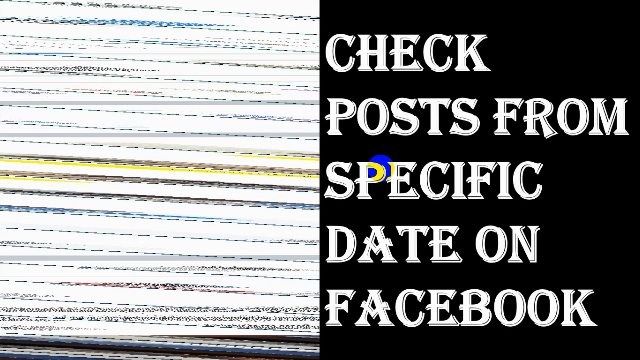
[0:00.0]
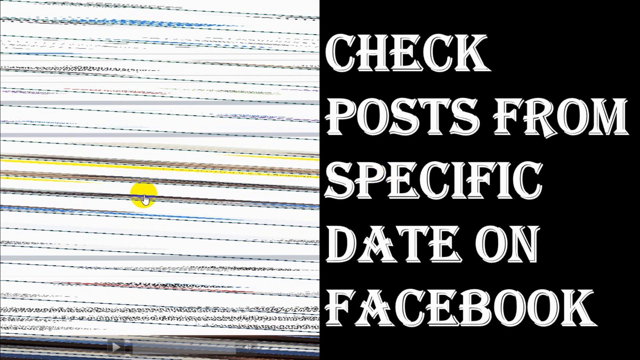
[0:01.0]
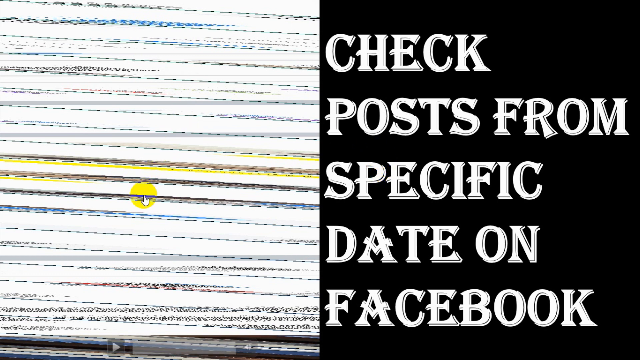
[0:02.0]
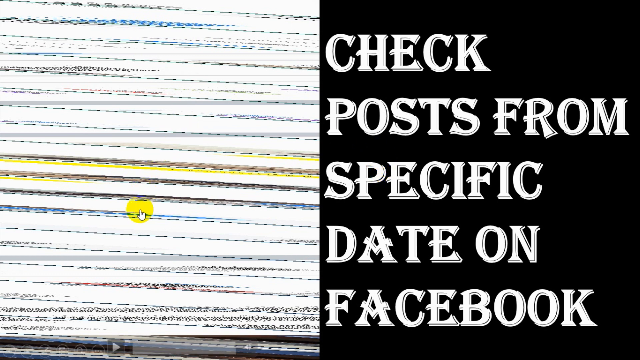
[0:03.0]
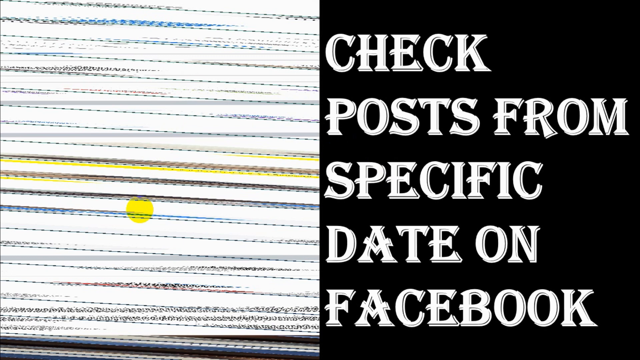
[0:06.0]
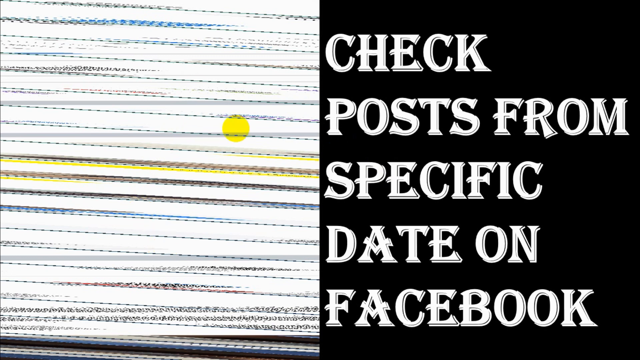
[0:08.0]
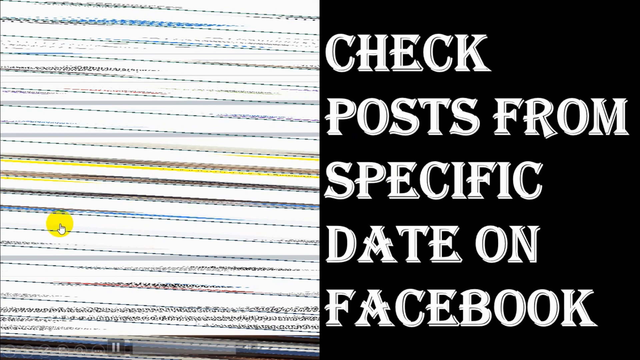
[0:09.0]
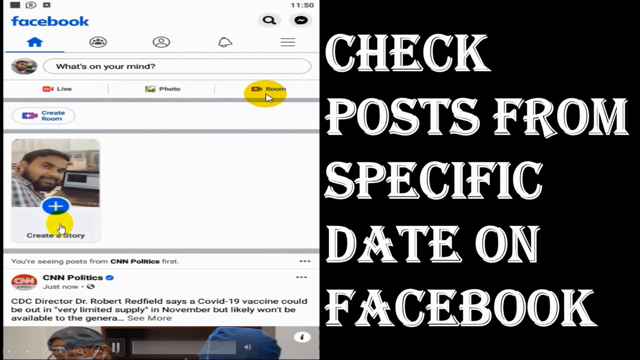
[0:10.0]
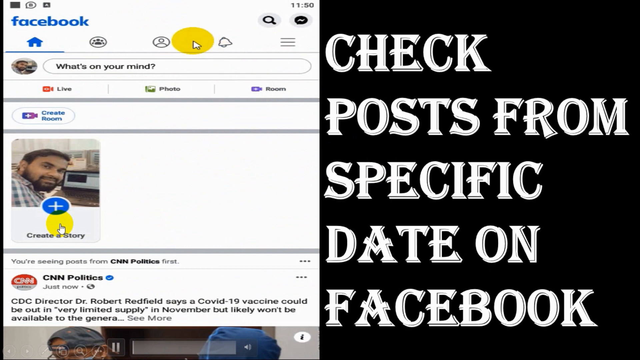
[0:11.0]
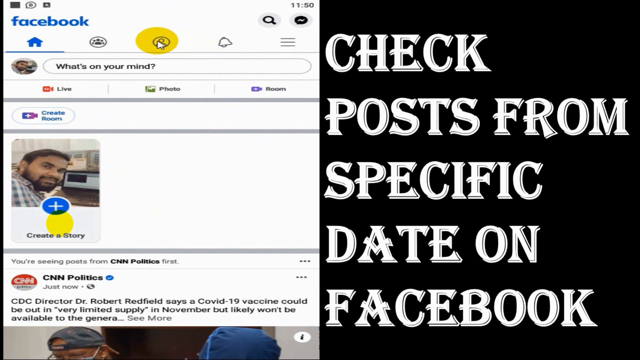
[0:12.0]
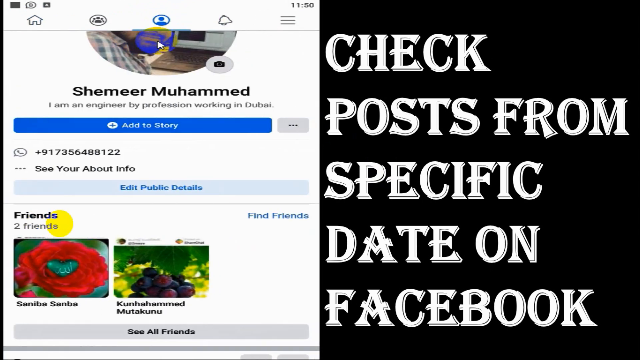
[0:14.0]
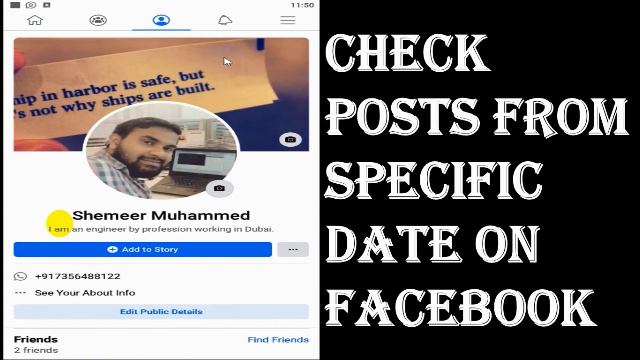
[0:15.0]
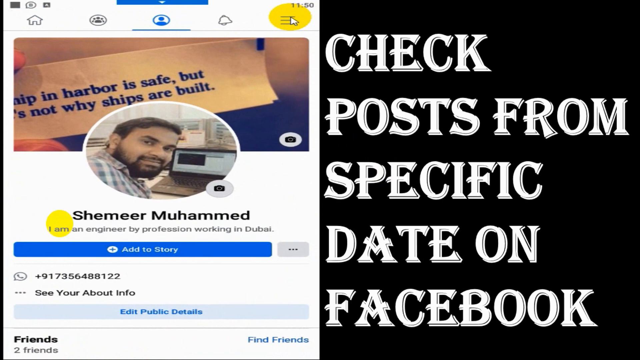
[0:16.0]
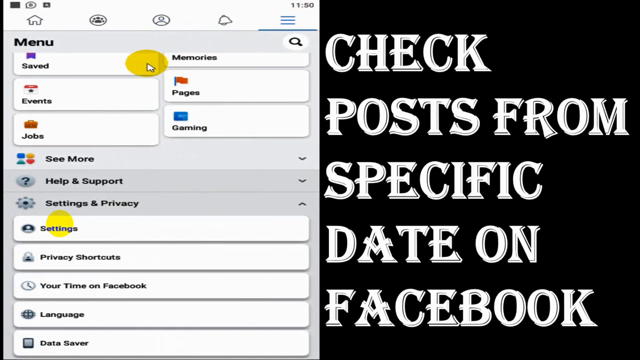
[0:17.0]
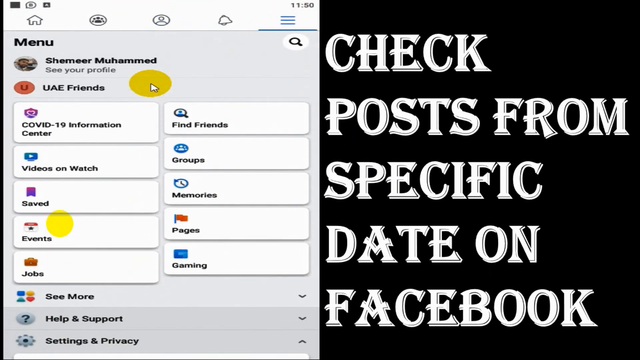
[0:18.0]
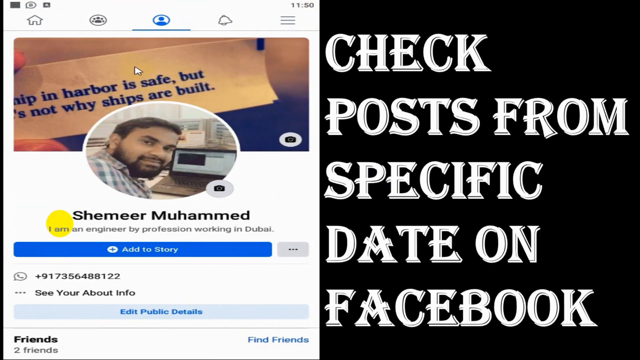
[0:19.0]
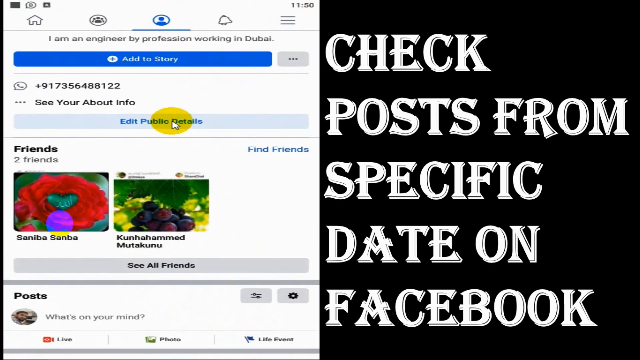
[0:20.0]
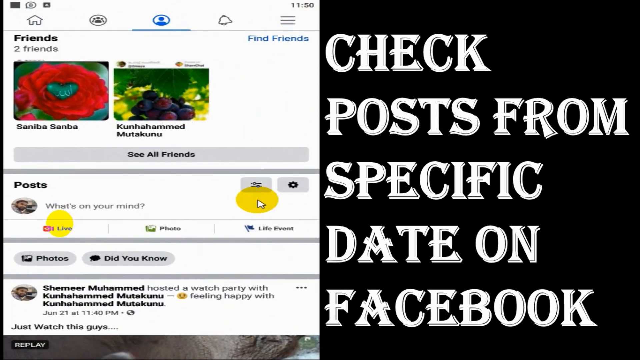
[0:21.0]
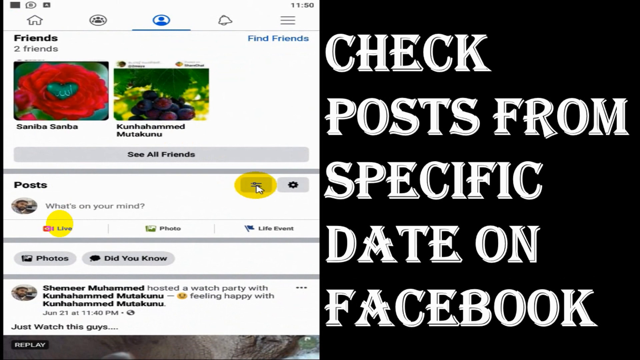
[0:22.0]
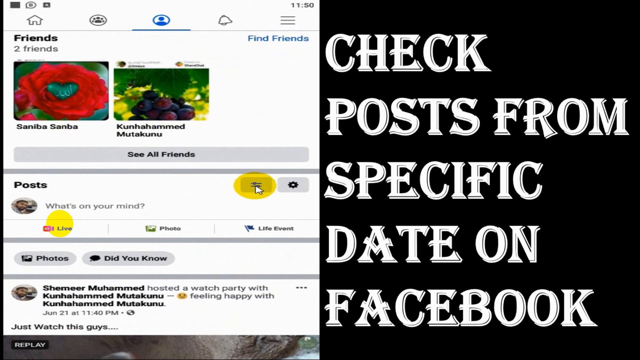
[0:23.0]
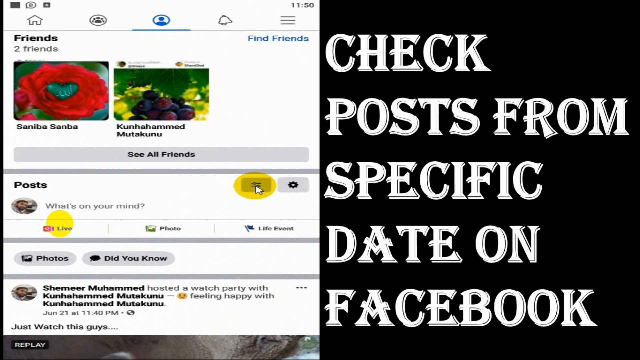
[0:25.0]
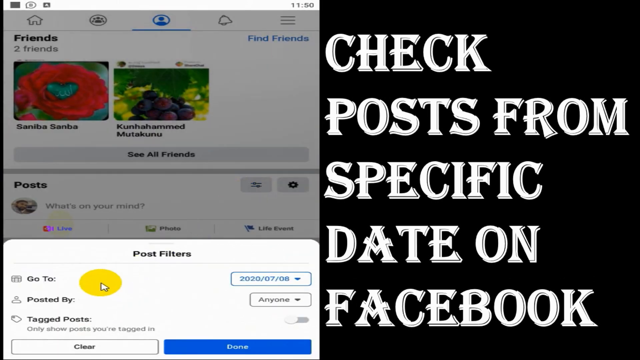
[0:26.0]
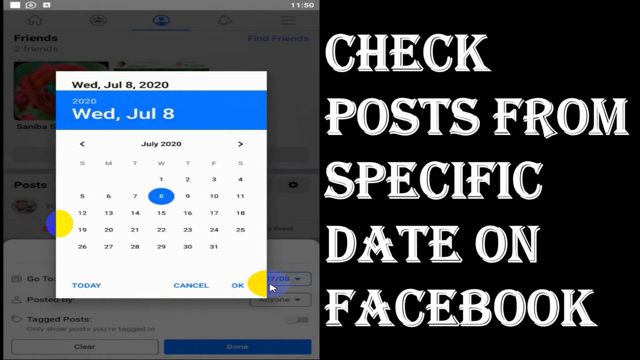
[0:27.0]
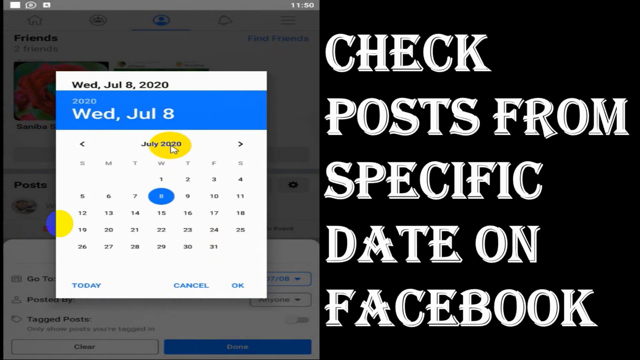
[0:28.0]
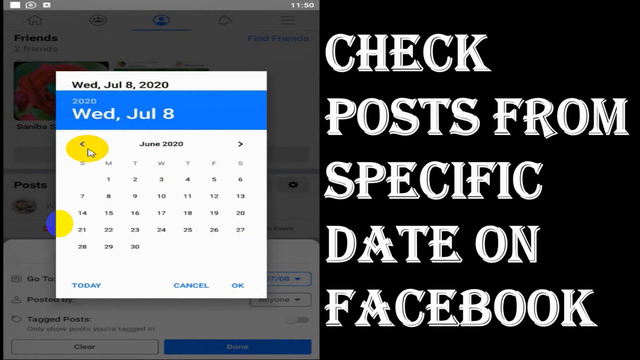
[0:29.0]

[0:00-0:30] An odd pattern fills the left side of the screen, while the right side reads "Check posts from specific date on Facebook." A cursor is highlighted by a yellow circle. The cursor moves to the left side of the screen and hovers in the middle; a click is made, but nothing happens. The cursor then disappears while the yellow circle remains. The circle is moved around a bit, another click is made, and a Facebook page appears, slightly squished top to bottom, showing a picture of a man. A post by CNN Politics is near the bottom of the screen. The cursor moves to the top middle of the screen and hovers over the Facebook profile icon. Clicking it opens the profile page of someone named Shemeer Muhammed, which says "I am an engineer by profession working in Dubai" and shows the usual Facebook elements, including that he has two friends. The page is scrolled up, showing the image of the man with a fortune cookie-type message in the background. The cursor moves to the hamburger menu at the top right, and a click opens the Facebook menu with many options. The menu is scrolled to the top, the man's name at the top is clicked, and his profile page returns. The page is scrolled down to show posts. The hamburger menu next to the posts is clicked, revealing the post filters menu. A calendar is brought up that says Wednesday, July the 8th, 2020. The cursor clicks a left-facing arrow to reveal June 2020 on the calendar. Finally, a click is made at the bottom left corner of the calendar where it says "Today."